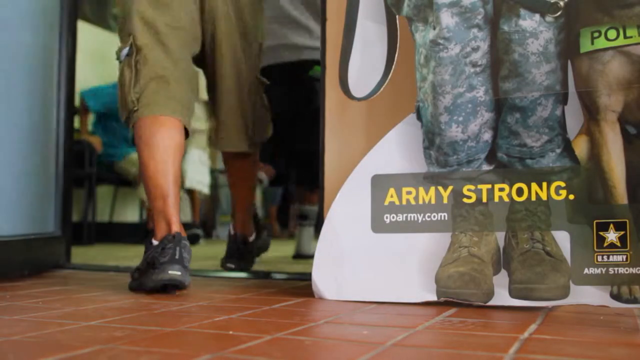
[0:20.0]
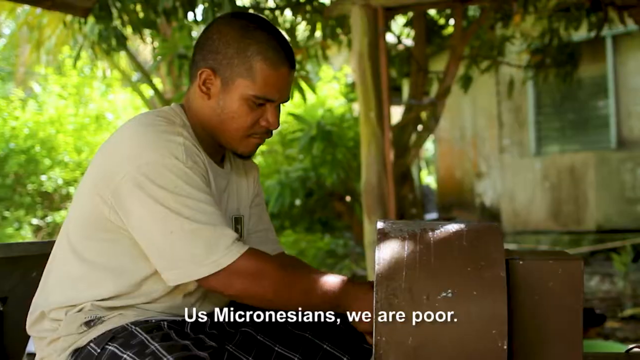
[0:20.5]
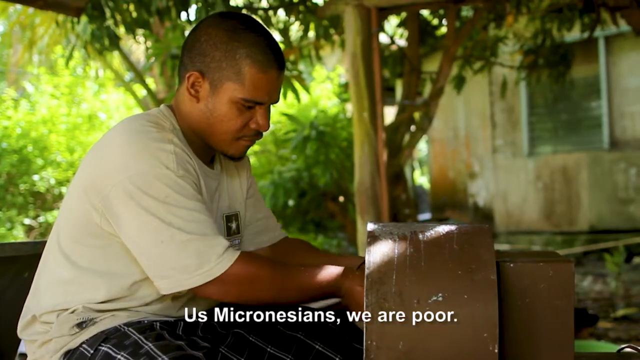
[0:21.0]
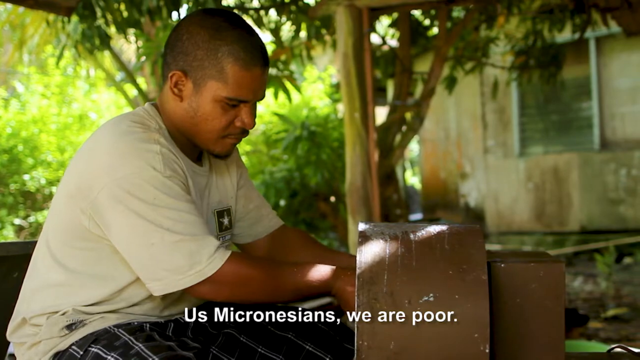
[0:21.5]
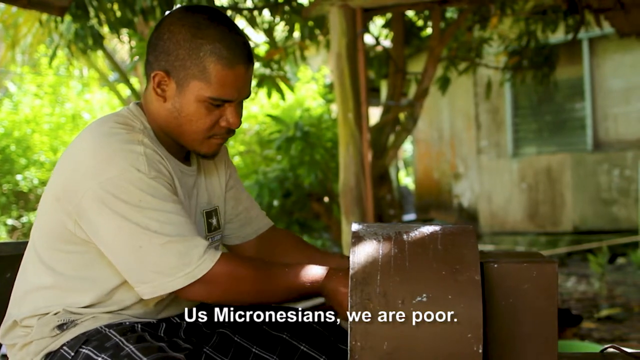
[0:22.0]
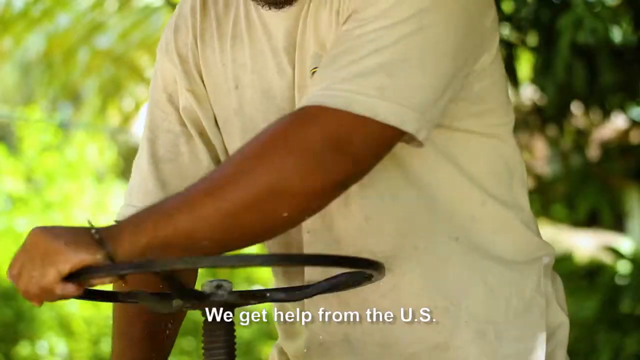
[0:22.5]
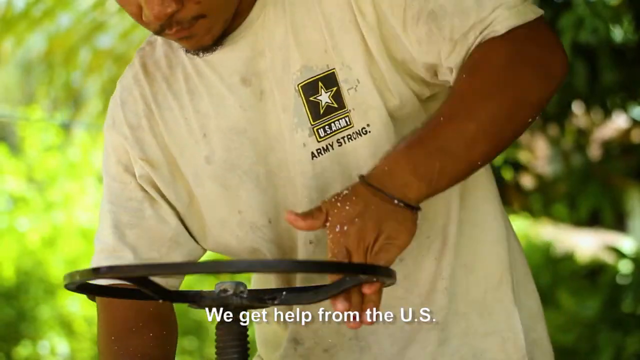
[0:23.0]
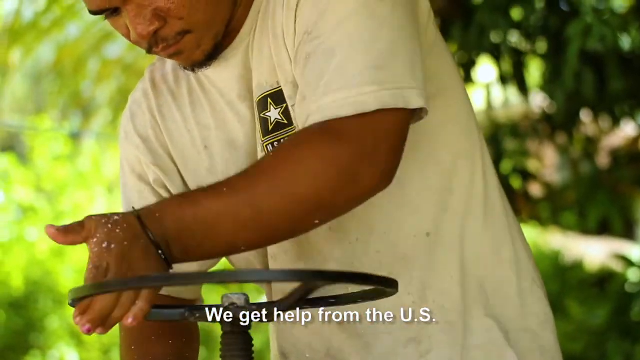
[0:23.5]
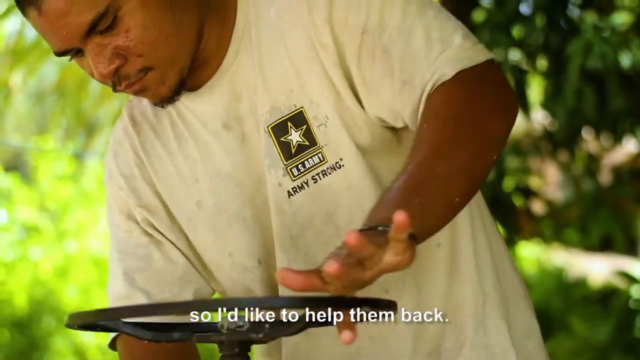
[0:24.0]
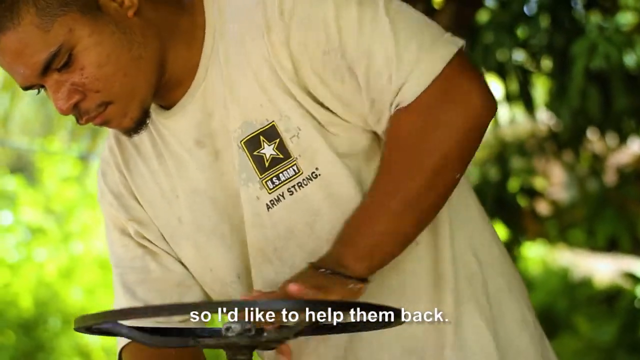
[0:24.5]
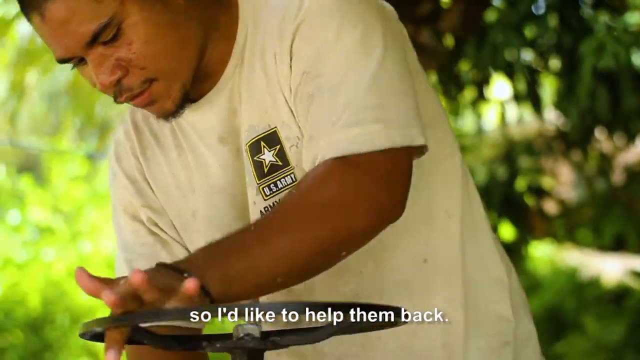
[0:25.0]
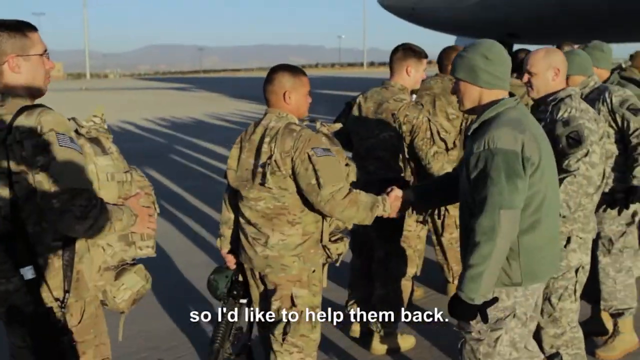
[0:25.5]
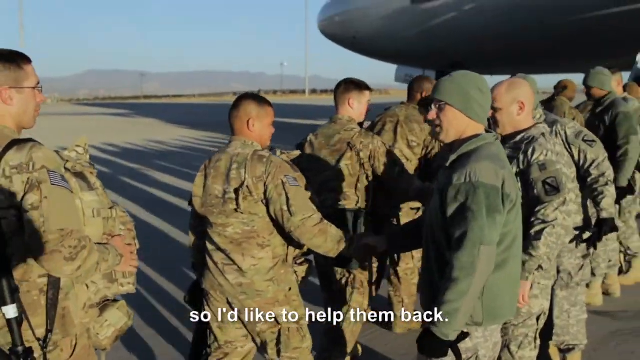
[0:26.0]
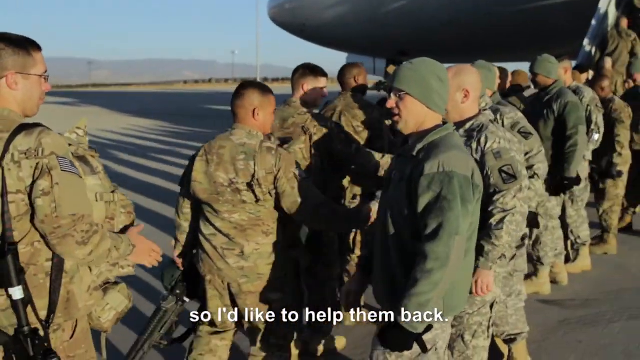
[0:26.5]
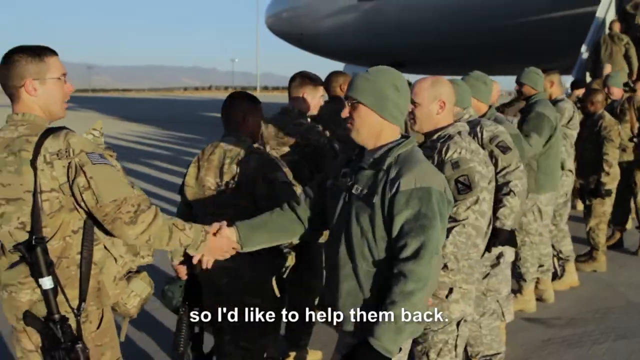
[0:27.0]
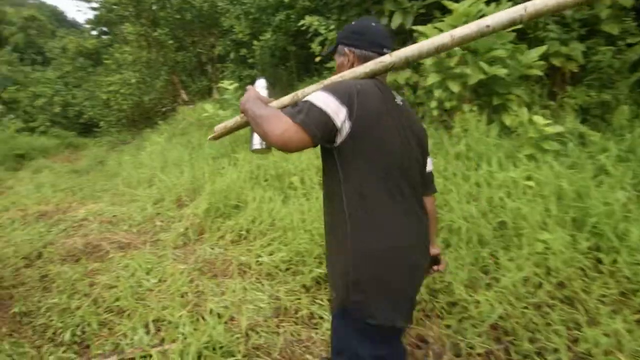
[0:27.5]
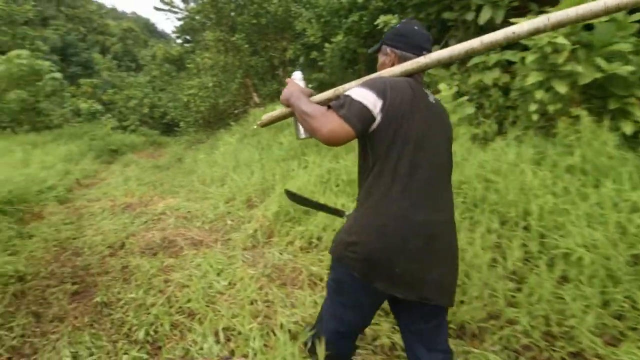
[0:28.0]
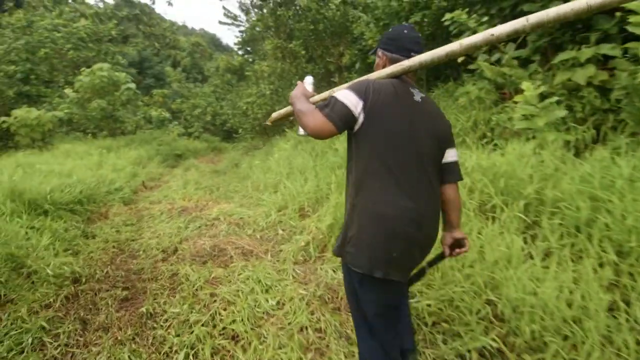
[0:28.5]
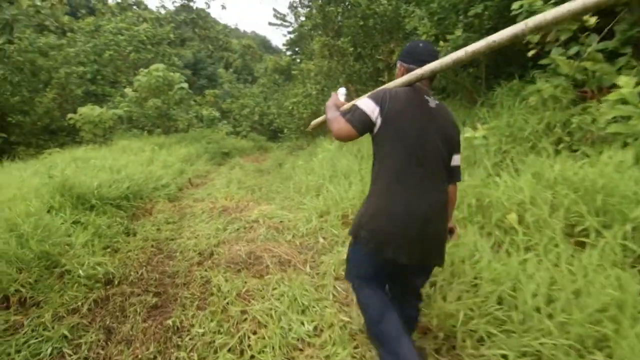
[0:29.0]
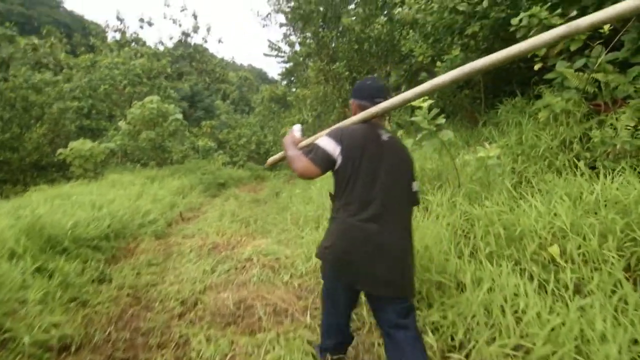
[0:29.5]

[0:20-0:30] The feet of people walk past a U.S. Army recruitment poster, seen only from the waist down. Next, a brown-skinned man appears outside a house with dirty brown walls. He is seated in the foreground and walks on the steering of what looks like a tractor. White text across the bottom of the screen reads "U.S. Micronesians, we are poor," then changes to "we get help from the U.S." The man wears a white U.S. Army t-shirt with the U.S. Army logo and the slogan "Army Strong" written below it. Next, a group of soldiers in Army camouflage uniforms on the tarmac board a train. A man is then seen from behind walking over dense green grass toward a forest thick with vegetation, holding a log over his left shoulder and a machete in his right hand.